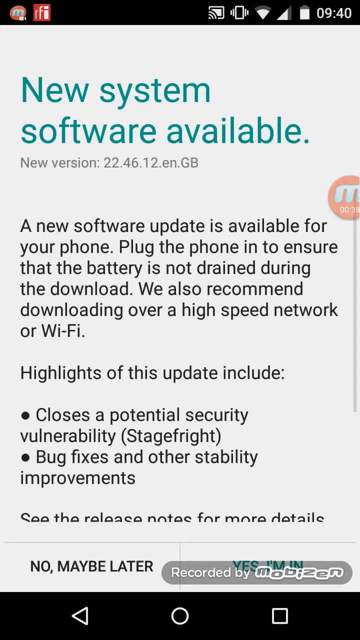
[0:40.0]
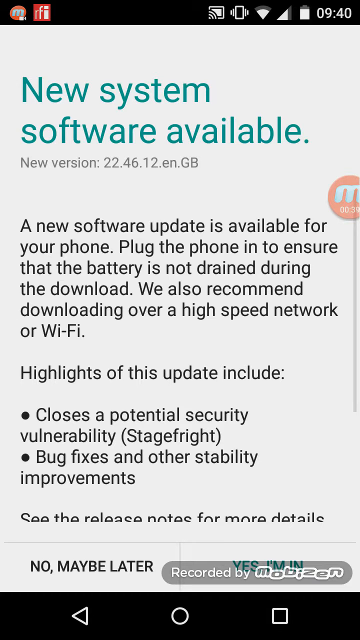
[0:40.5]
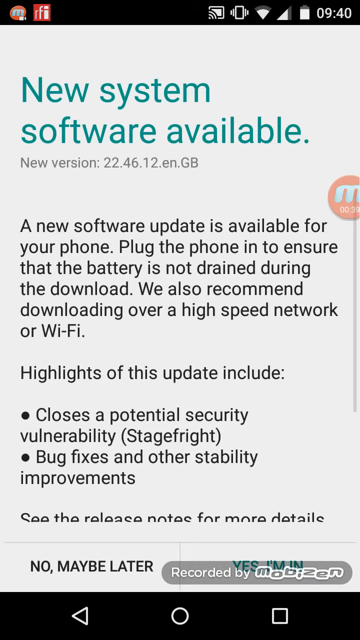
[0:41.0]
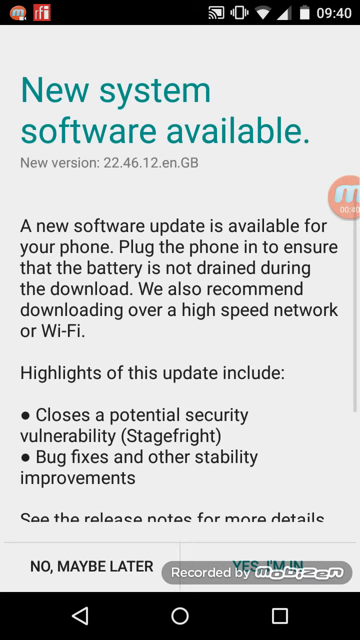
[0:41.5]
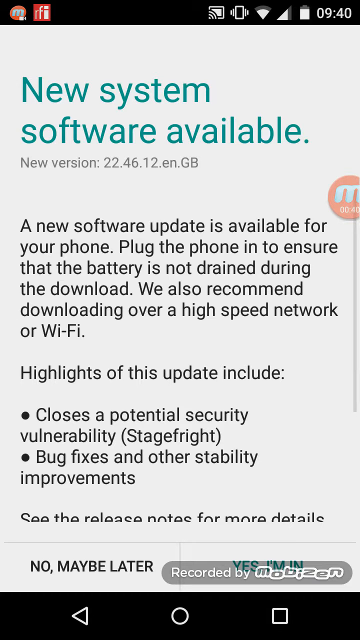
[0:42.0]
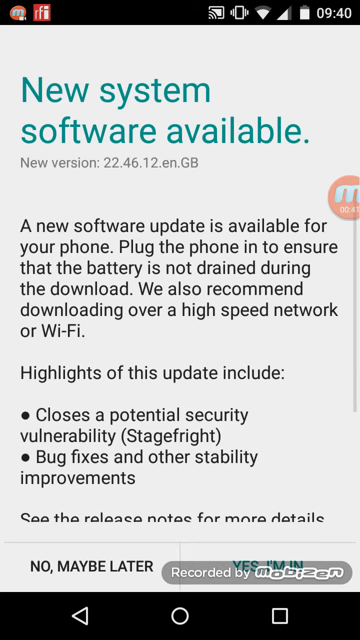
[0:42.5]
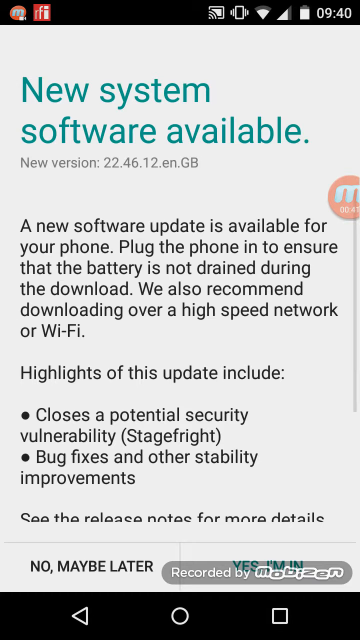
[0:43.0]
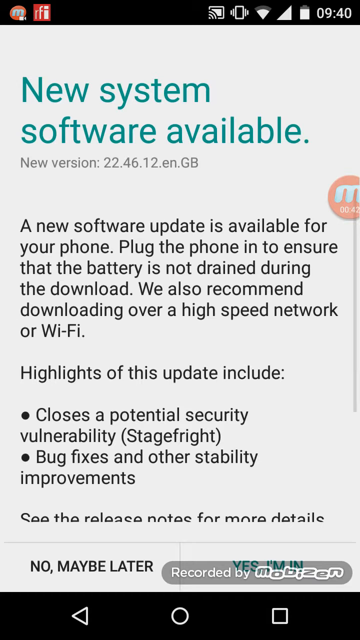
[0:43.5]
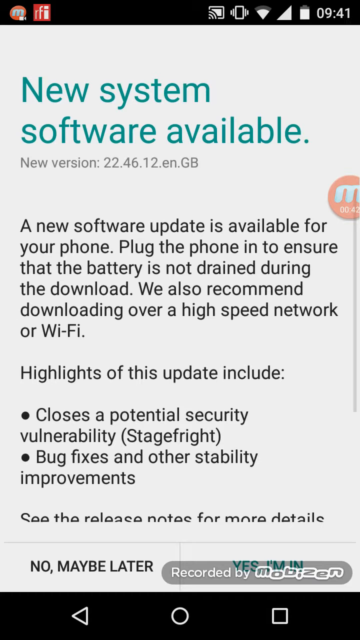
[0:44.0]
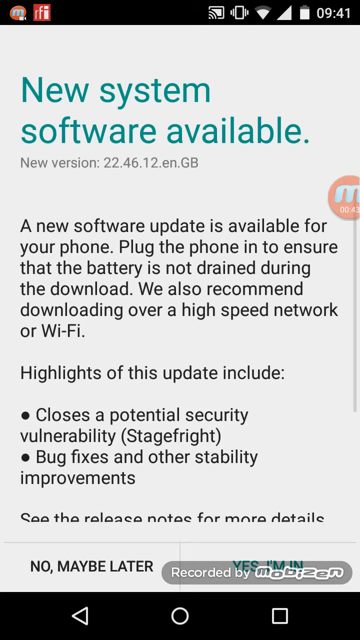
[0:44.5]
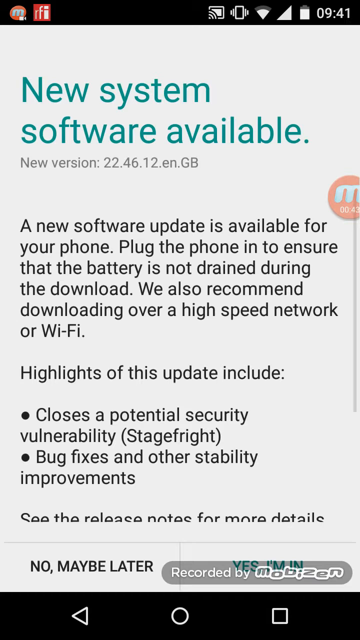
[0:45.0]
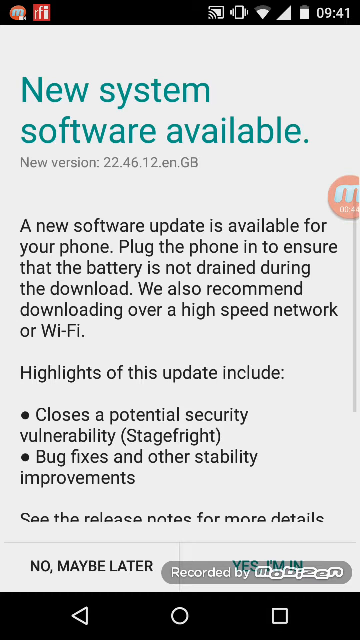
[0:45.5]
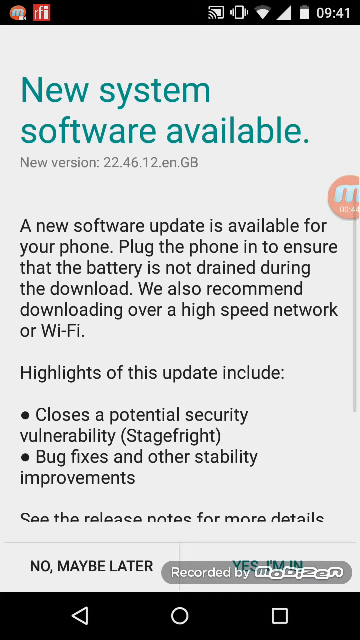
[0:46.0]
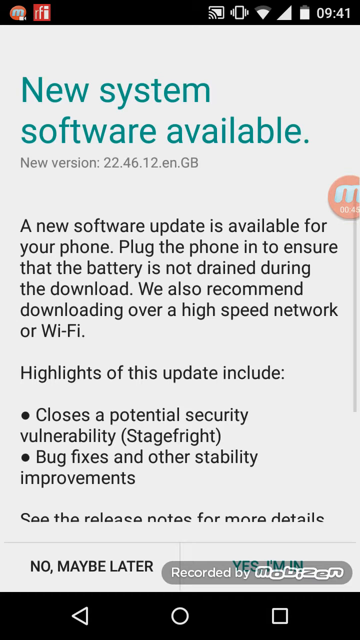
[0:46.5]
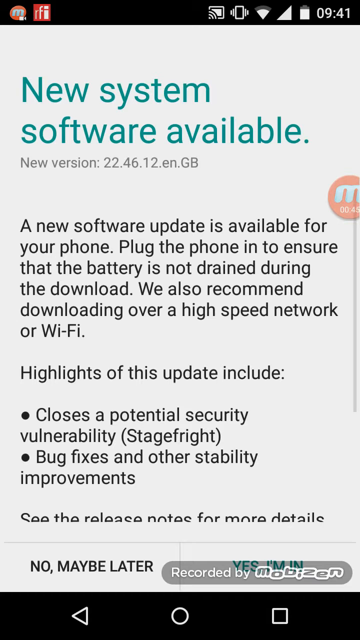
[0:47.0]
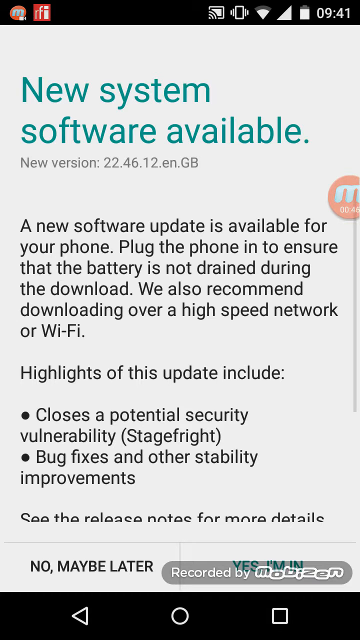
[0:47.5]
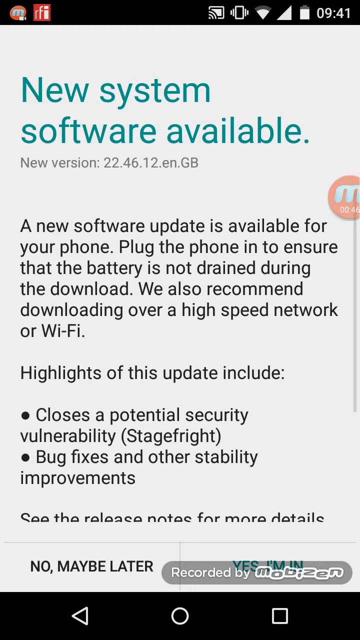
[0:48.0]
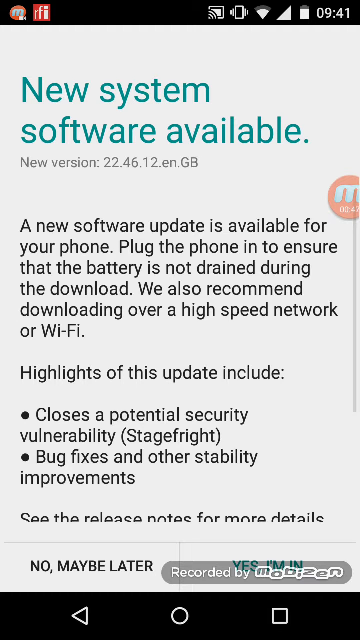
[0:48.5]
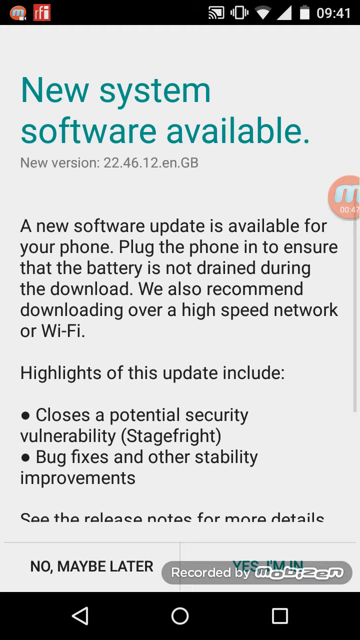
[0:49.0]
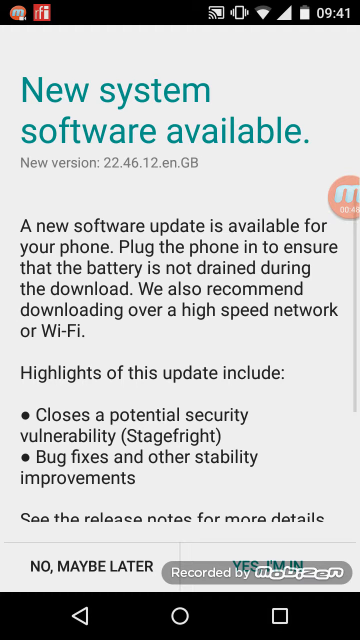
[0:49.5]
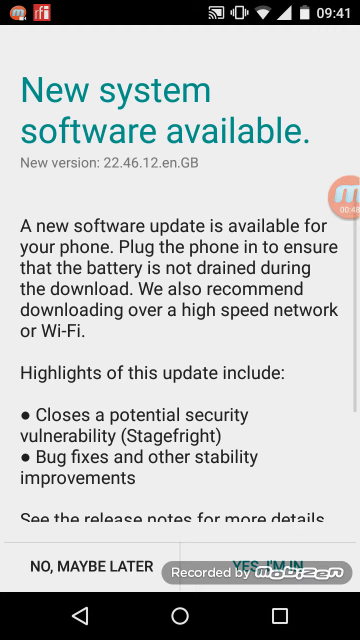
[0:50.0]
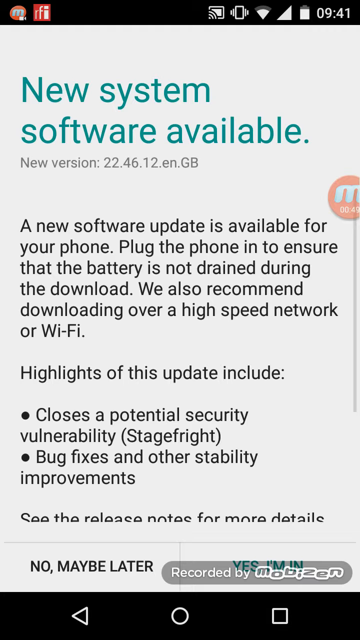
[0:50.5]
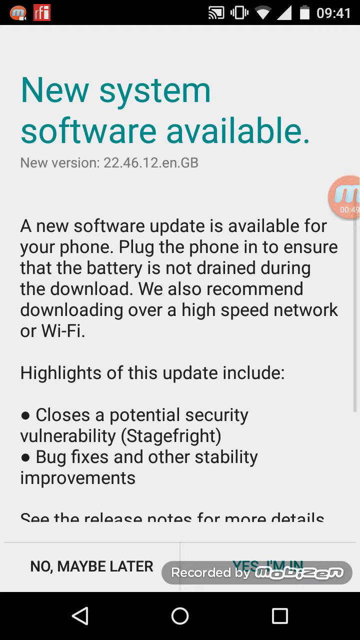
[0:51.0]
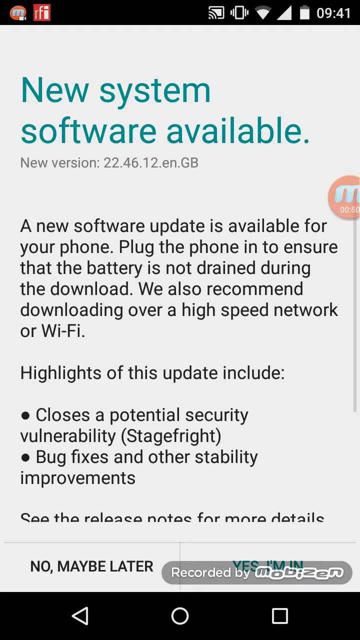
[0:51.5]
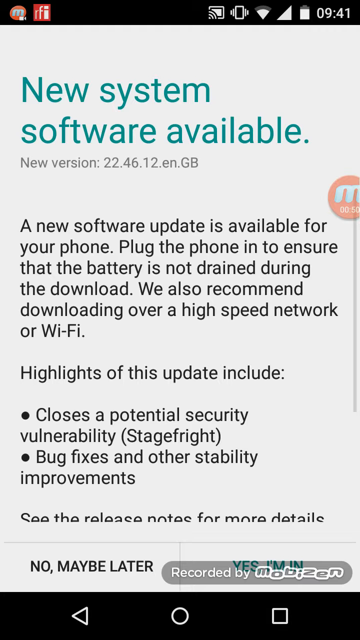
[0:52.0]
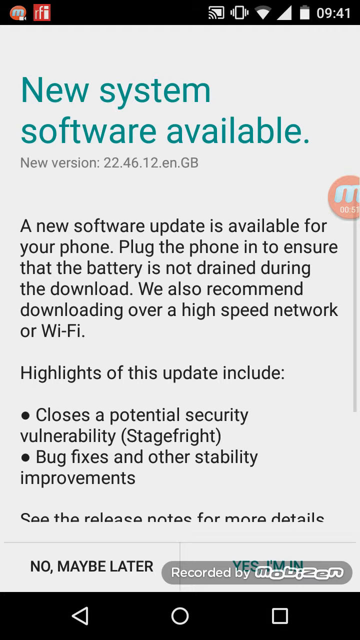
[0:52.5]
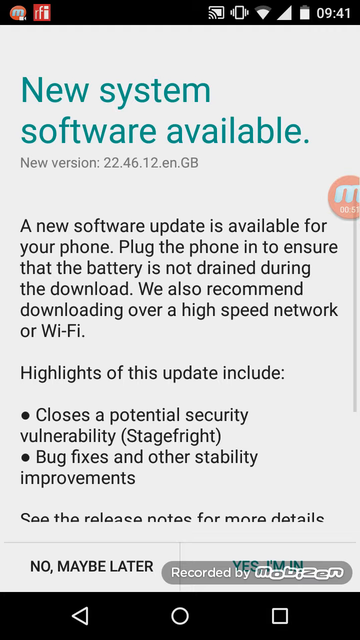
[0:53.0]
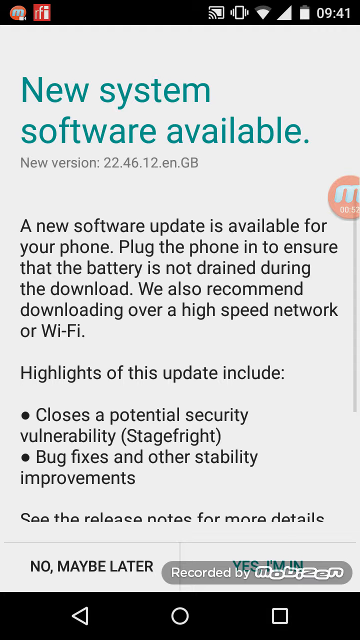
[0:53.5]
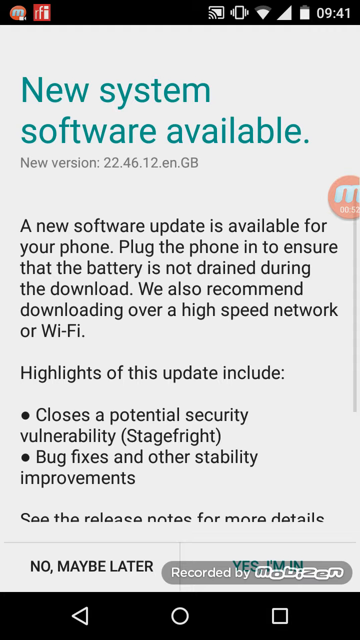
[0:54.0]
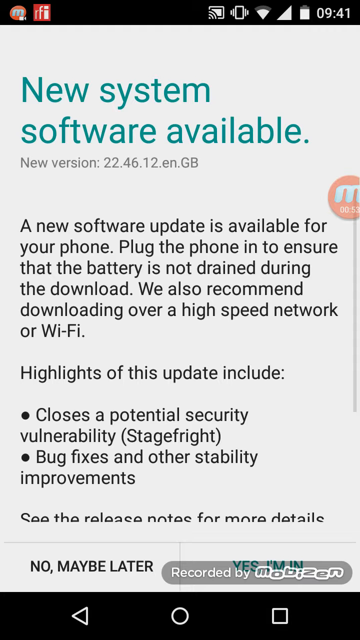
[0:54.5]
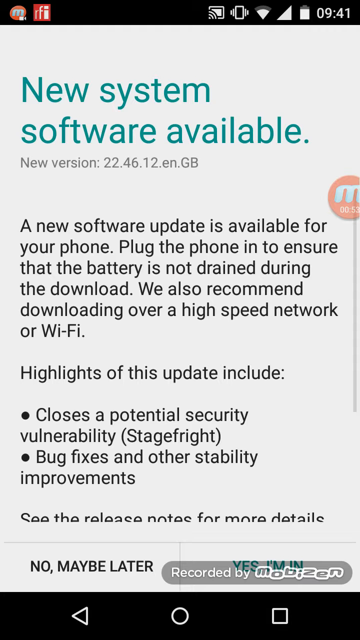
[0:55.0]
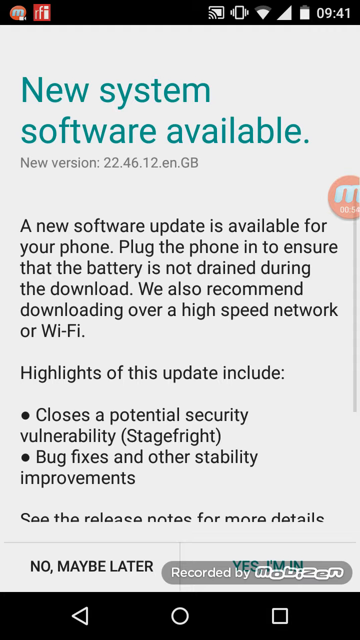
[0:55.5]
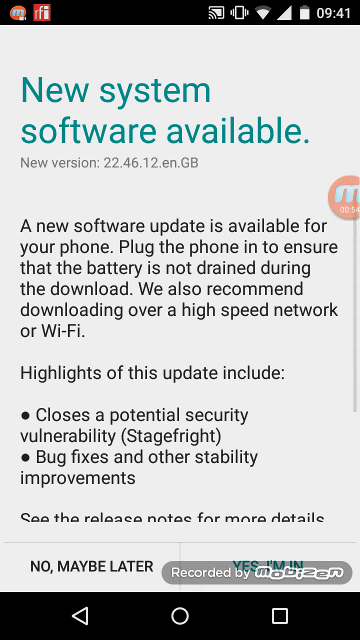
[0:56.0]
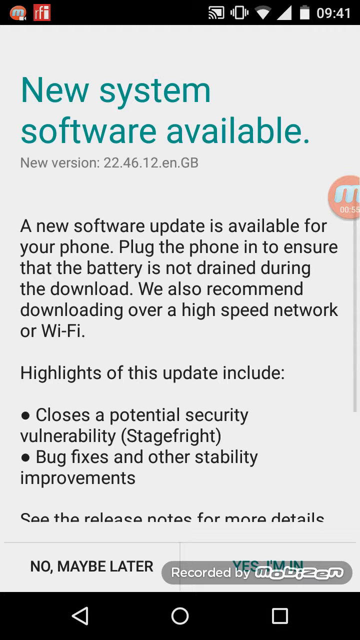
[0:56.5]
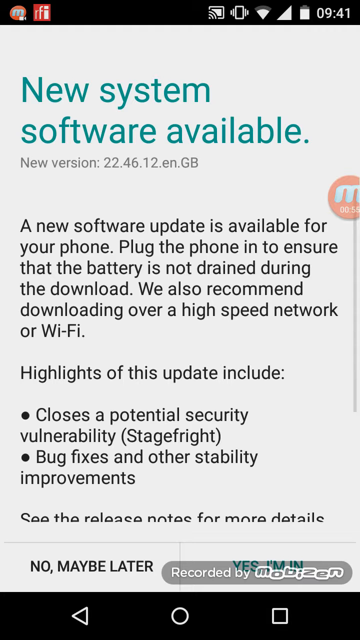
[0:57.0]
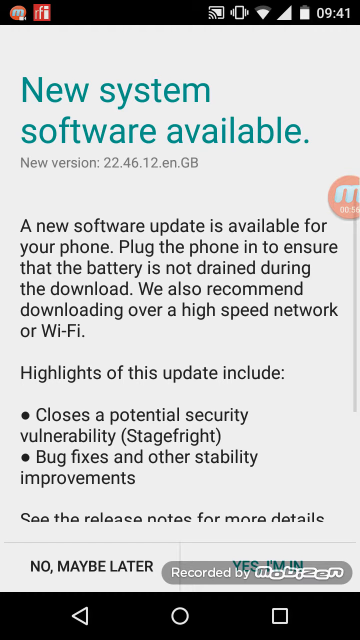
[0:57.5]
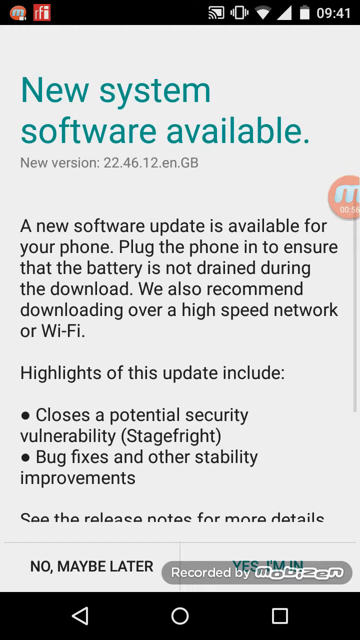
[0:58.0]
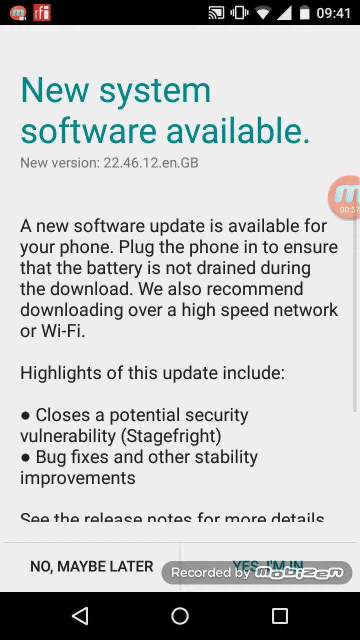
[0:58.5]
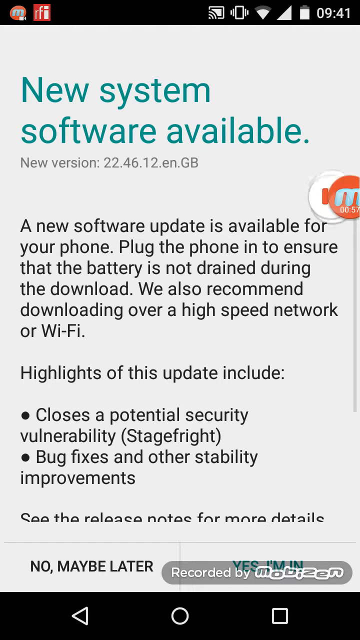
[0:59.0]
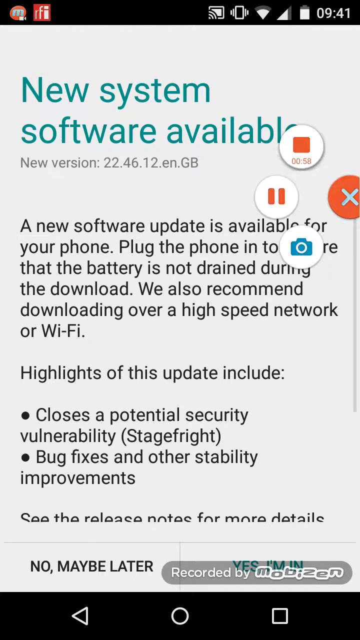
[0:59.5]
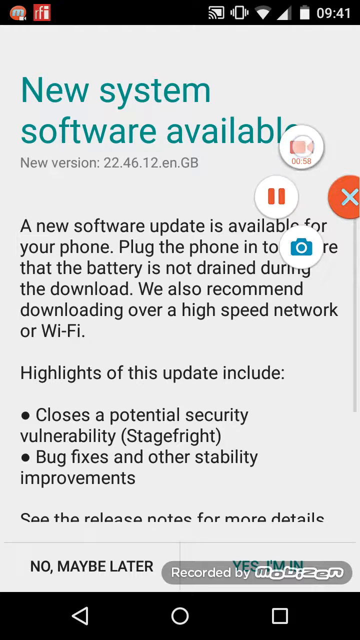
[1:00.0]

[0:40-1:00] A screen shows that new system software is available, with the new version listed as 22.46.12.en.gb. The message reads "a new software update is available for your phone. Plug the phone in ensure that the battery is not drained during the download. We also recommend downloading over a high-speed network or Wi-Fi. Highlights of this update includes close a potential security vulnerability", followed by a mention of bug fixes and other stability improvements.